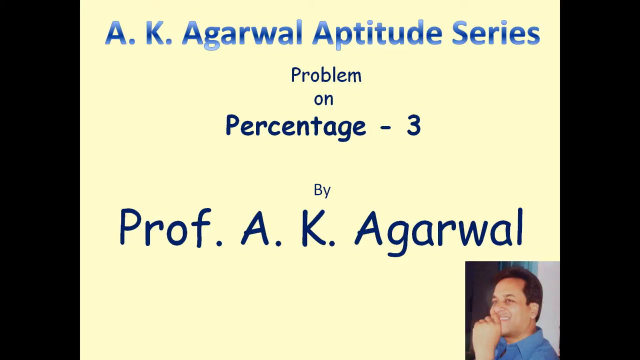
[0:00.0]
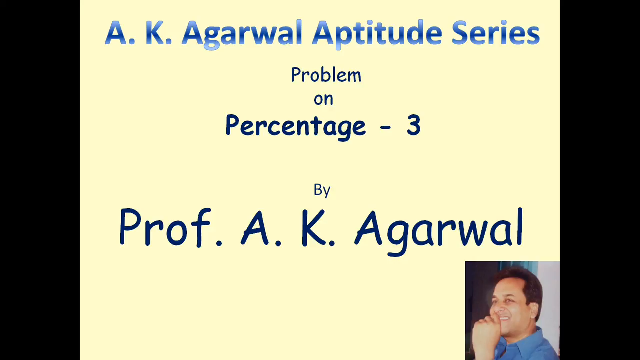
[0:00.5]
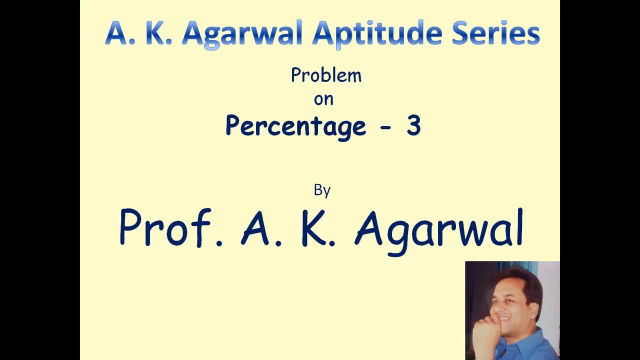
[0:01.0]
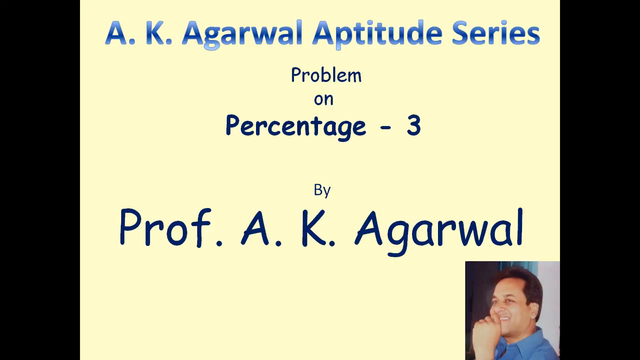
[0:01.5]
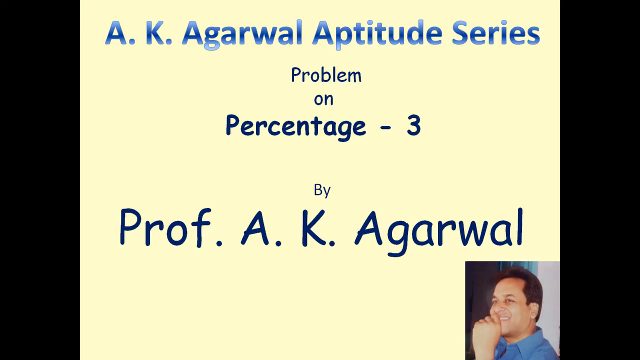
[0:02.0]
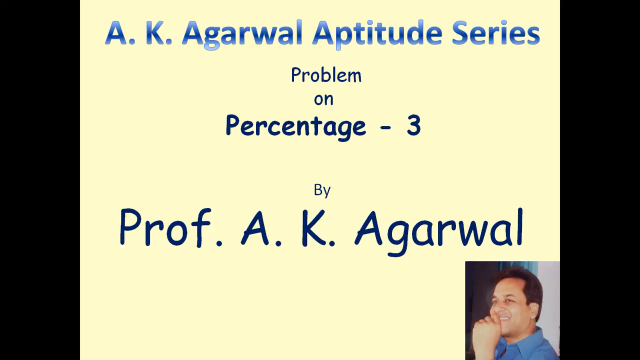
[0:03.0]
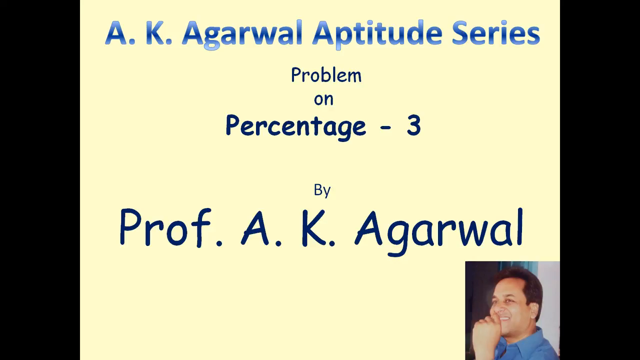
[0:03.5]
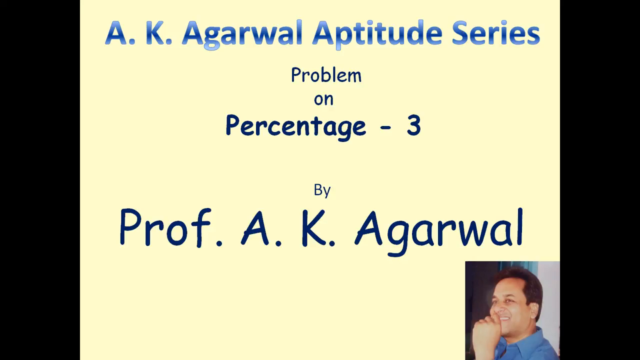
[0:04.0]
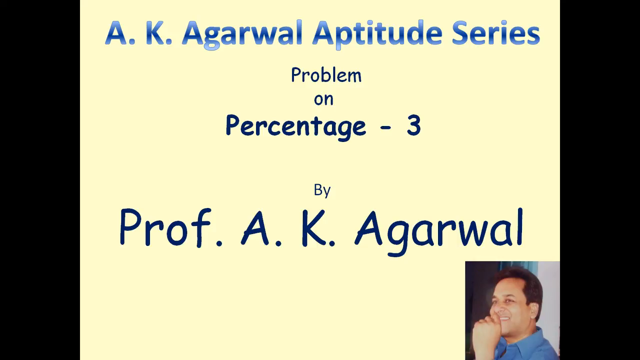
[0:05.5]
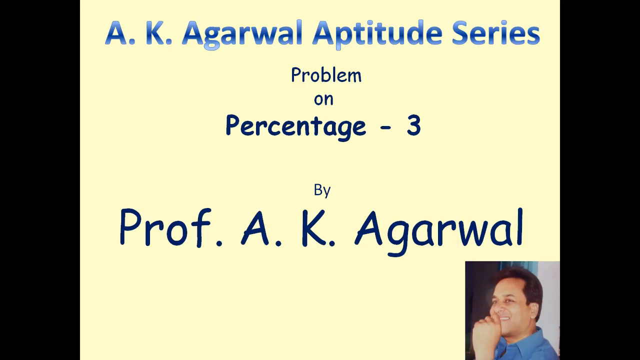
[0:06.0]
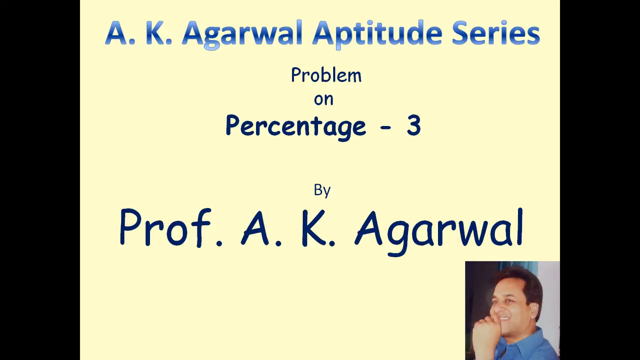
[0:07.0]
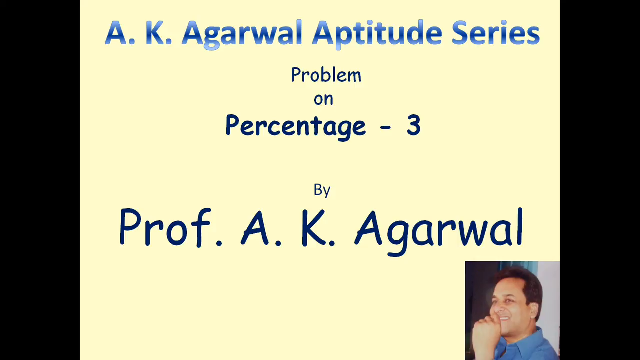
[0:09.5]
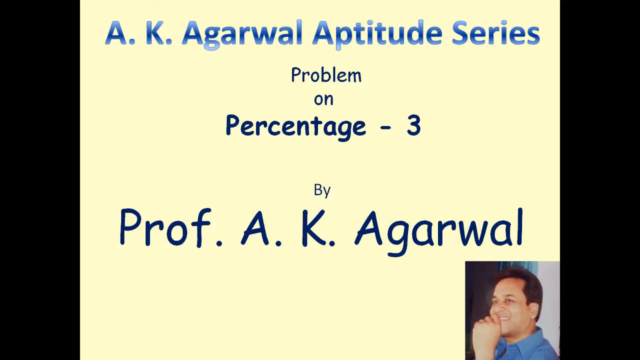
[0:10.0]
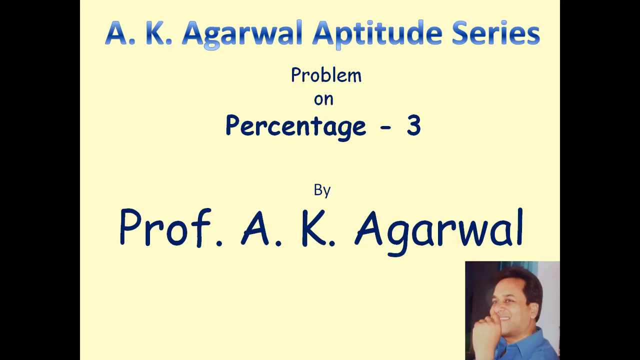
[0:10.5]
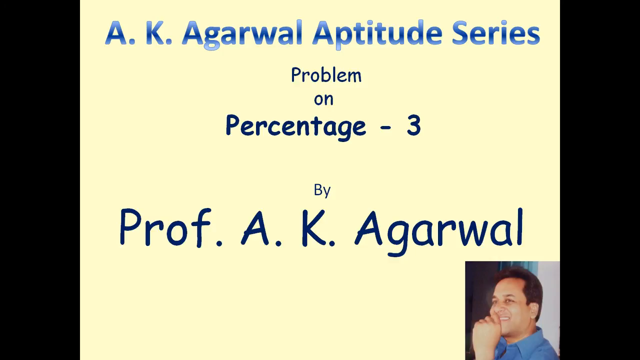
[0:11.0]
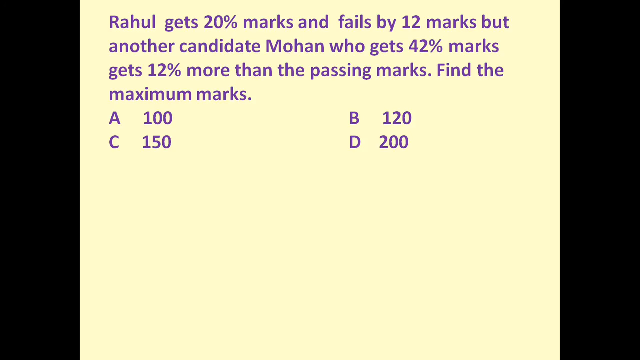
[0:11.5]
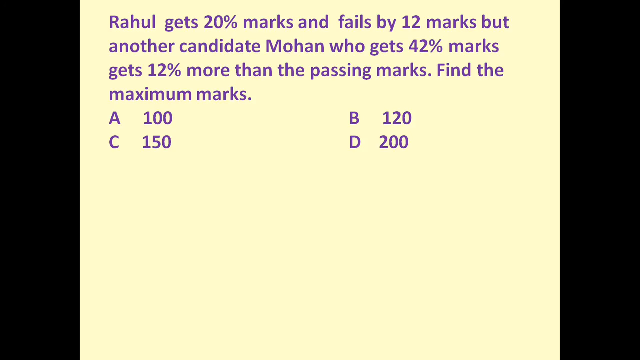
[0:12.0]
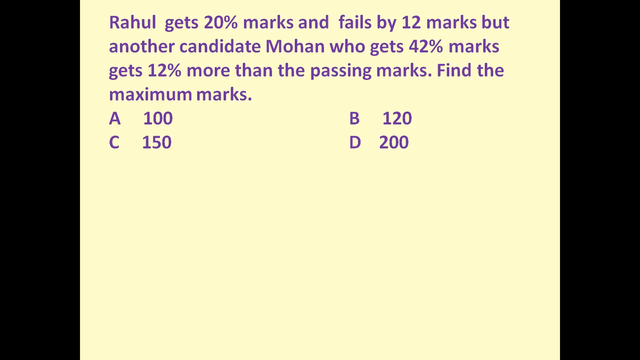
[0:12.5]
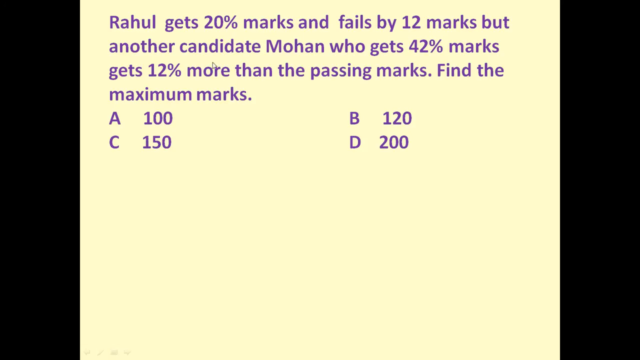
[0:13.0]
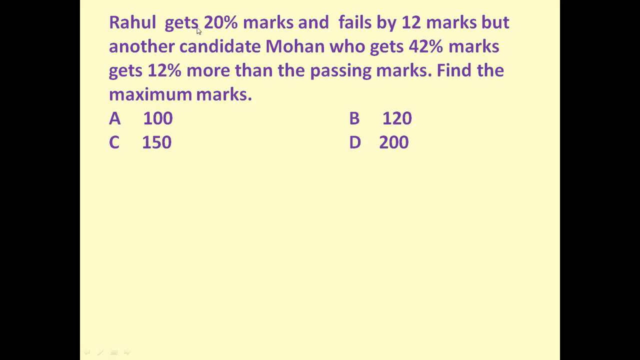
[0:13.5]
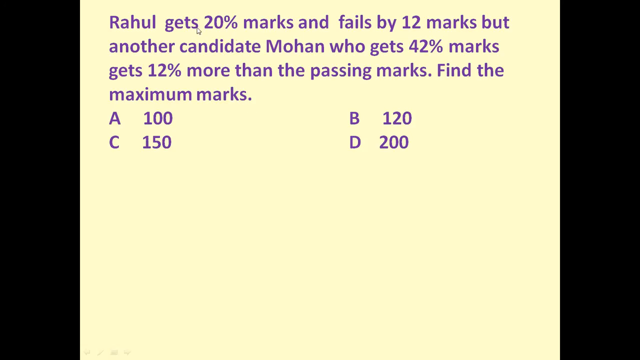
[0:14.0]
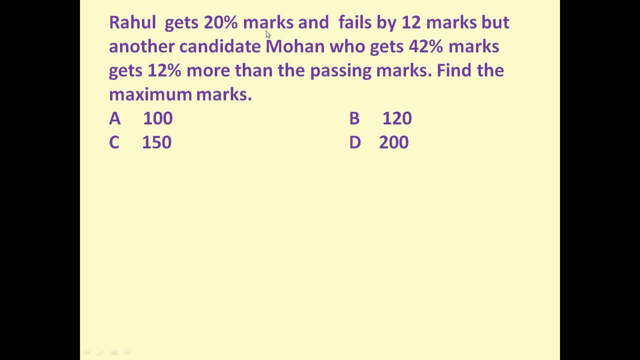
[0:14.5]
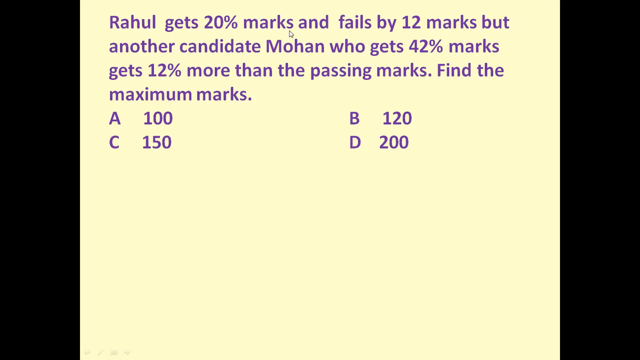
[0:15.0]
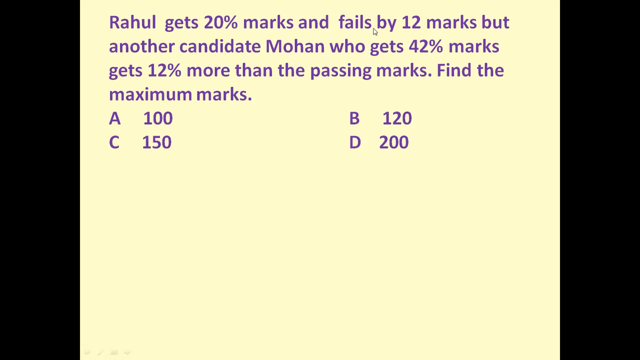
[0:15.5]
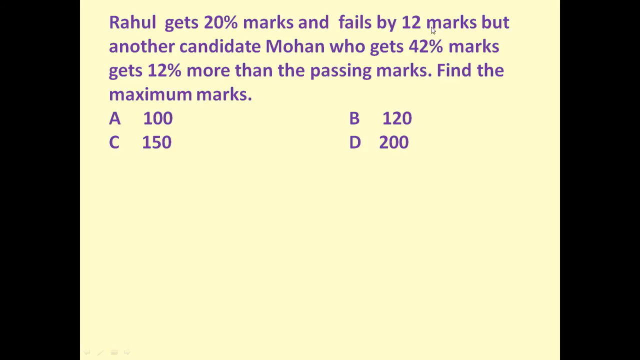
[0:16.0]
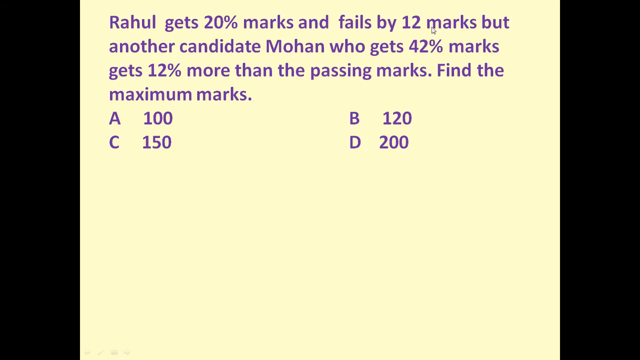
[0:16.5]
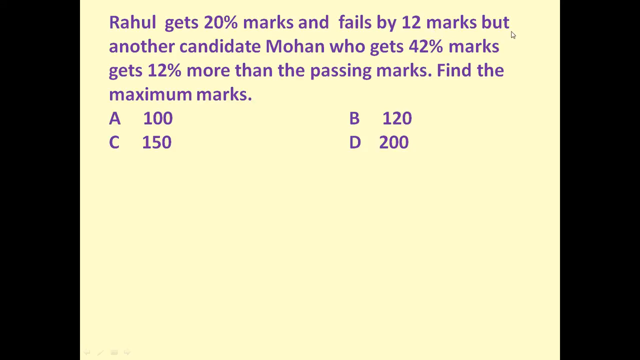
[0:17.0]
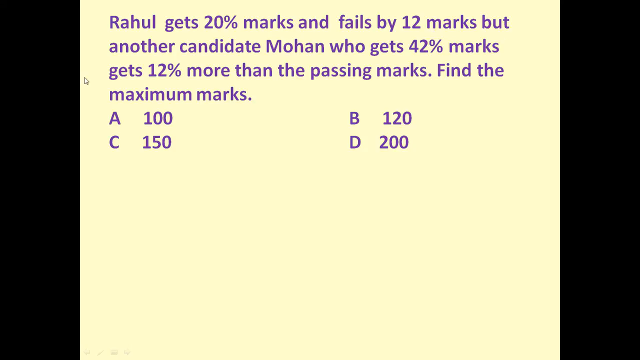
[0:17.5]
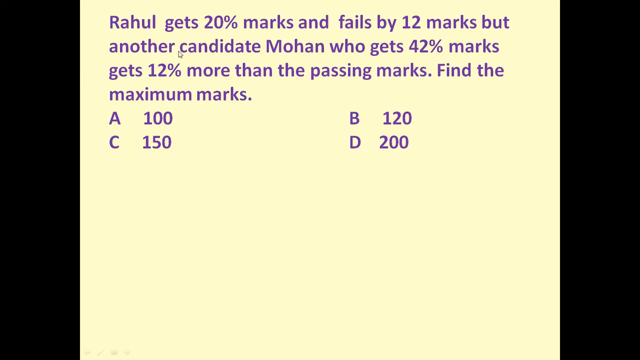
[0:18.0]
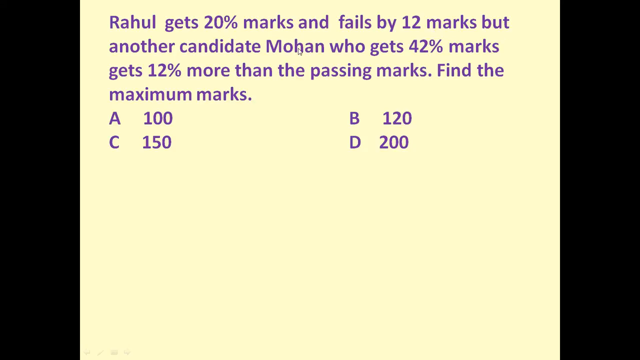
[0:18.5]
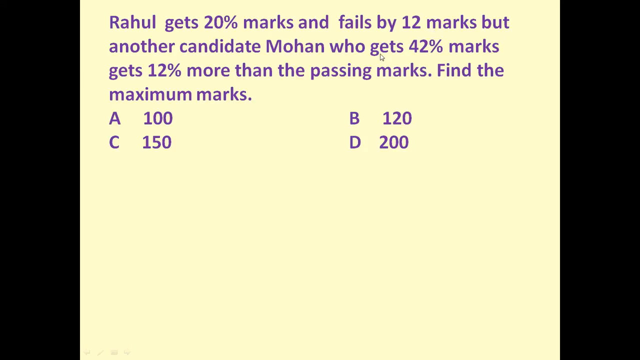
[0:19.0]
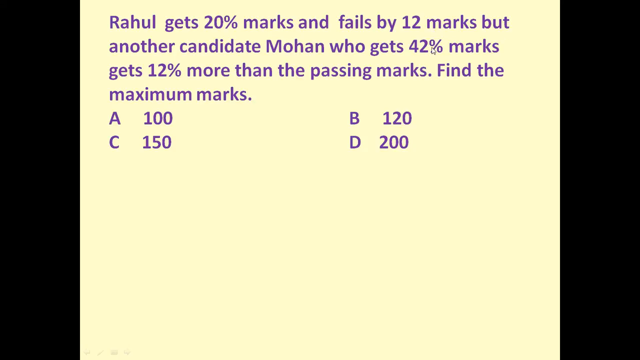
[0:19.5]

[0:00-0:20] The title "A.K. Agarwal aptitude series problem on percentage 3 by professor A.K. Agarwal" appears on a yellow page with blue letters, along with a picture of a smiling man with short brown hair. He has his hand in front of his mouth but is smiling and looks happy. The problem reads: "Raul gets 20% marks and fails by 12 marks. But another candidate, Mohan, who gets 42% marks, gets 12% more than the passing marks. Find the maximum marks." Four choices are given: A. 100, B. 120, C. 150, D. 200.